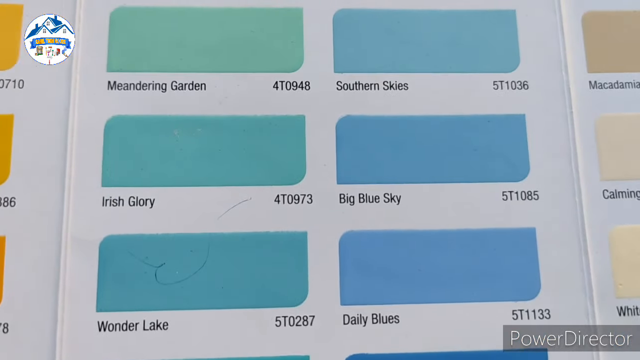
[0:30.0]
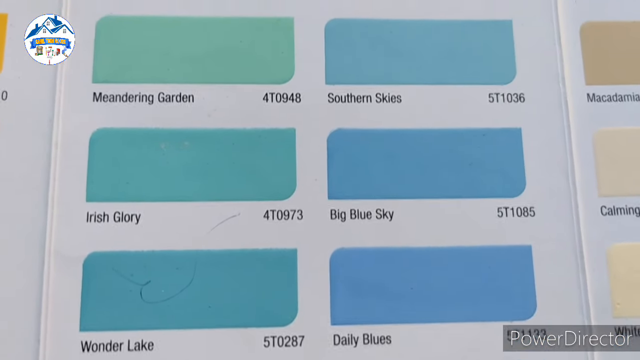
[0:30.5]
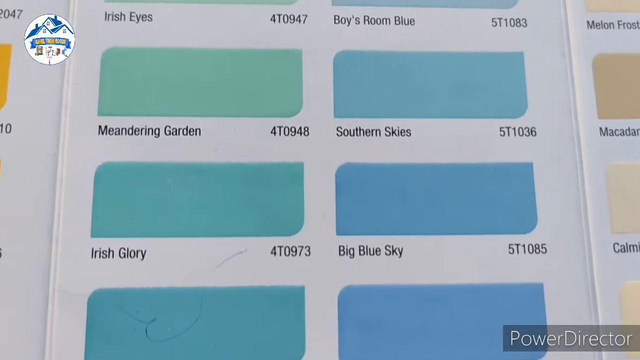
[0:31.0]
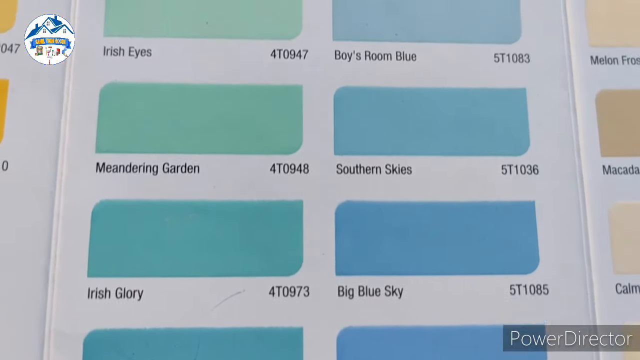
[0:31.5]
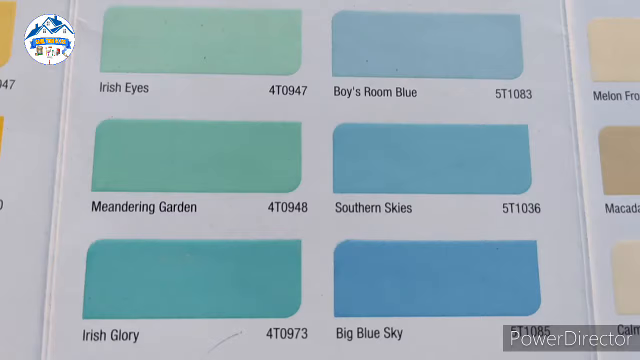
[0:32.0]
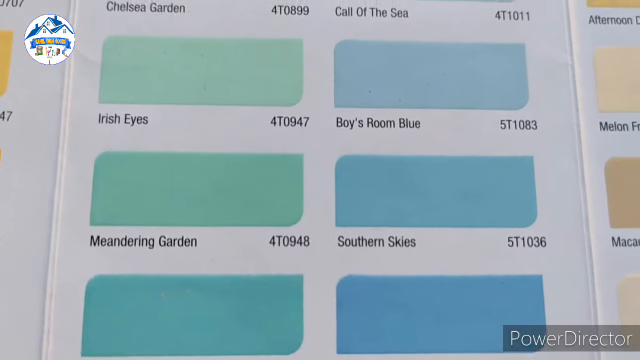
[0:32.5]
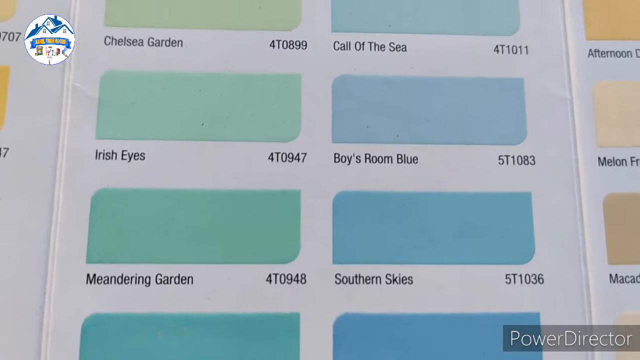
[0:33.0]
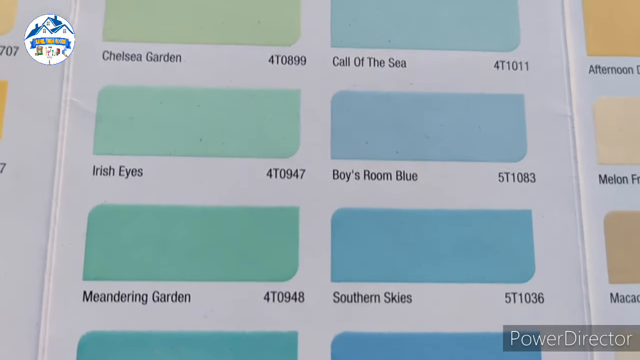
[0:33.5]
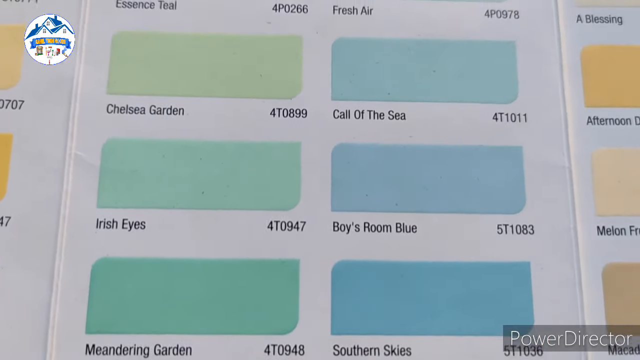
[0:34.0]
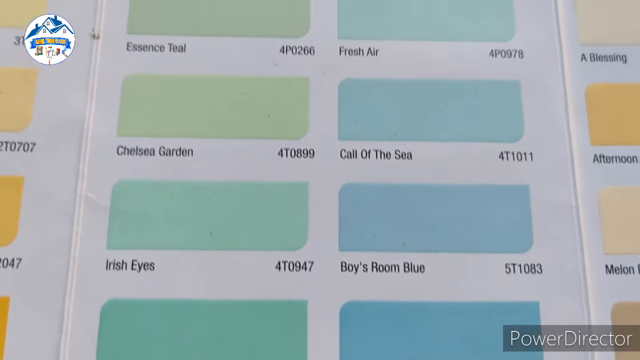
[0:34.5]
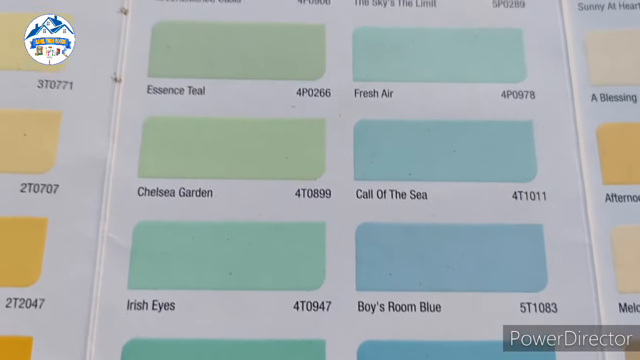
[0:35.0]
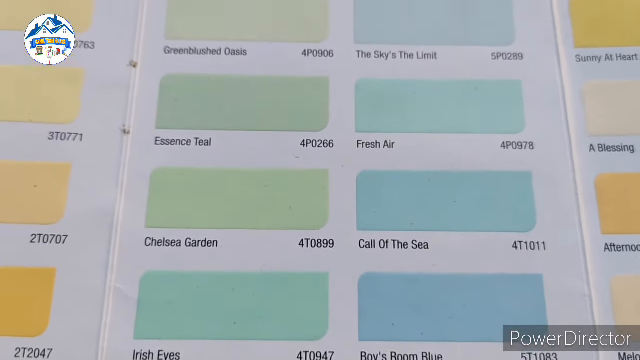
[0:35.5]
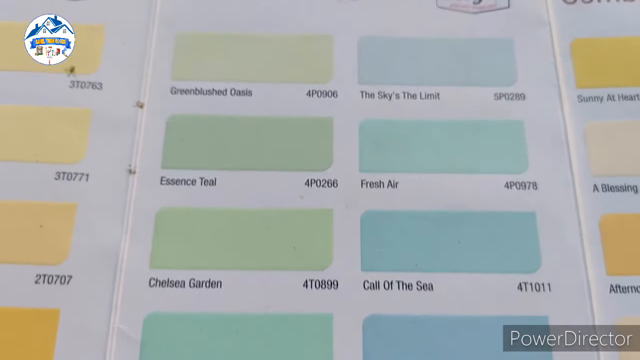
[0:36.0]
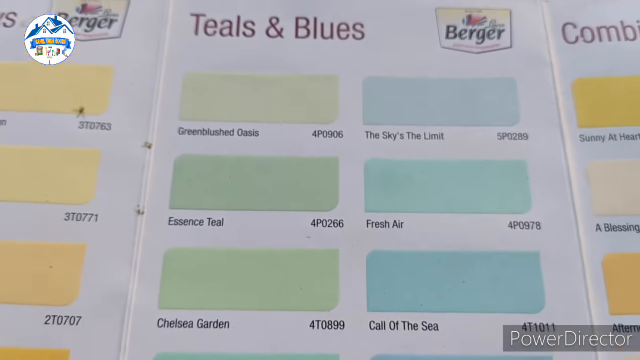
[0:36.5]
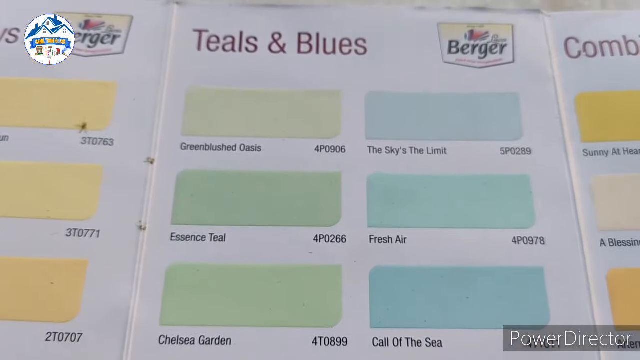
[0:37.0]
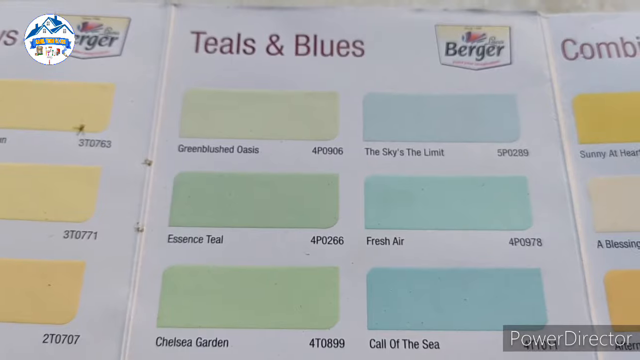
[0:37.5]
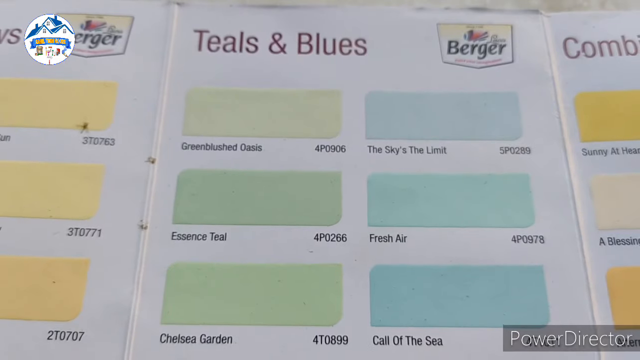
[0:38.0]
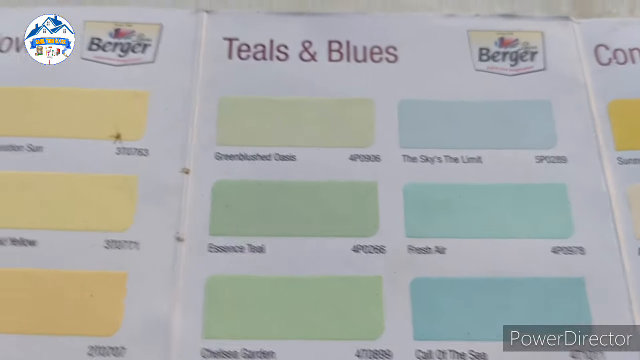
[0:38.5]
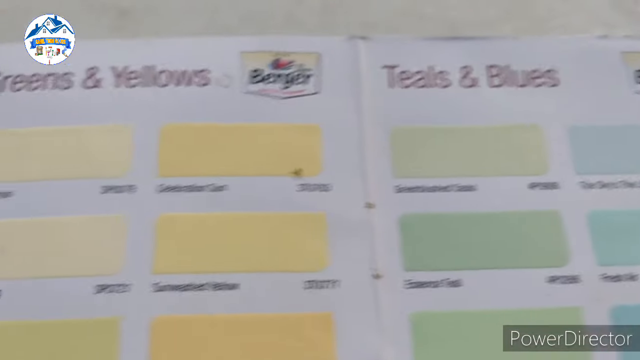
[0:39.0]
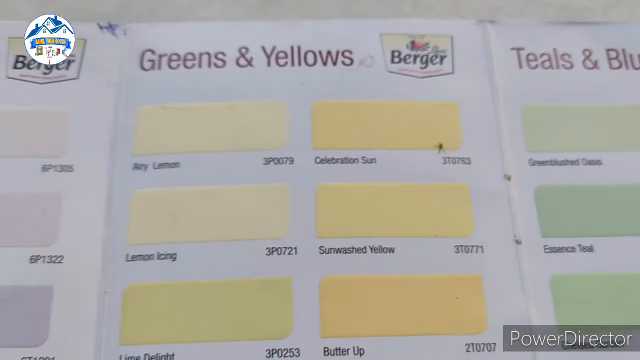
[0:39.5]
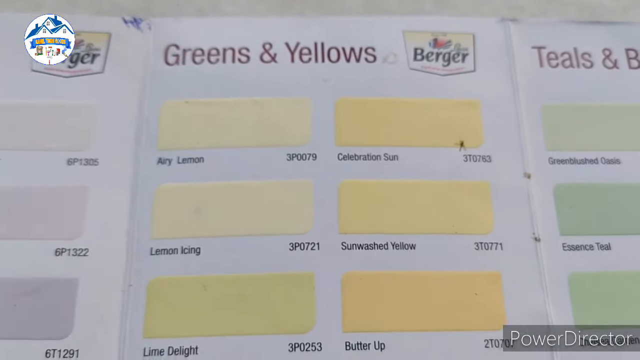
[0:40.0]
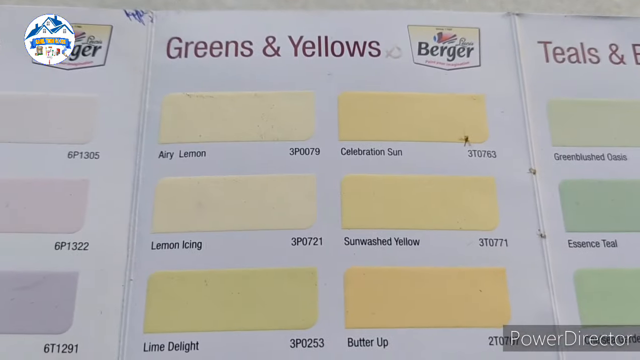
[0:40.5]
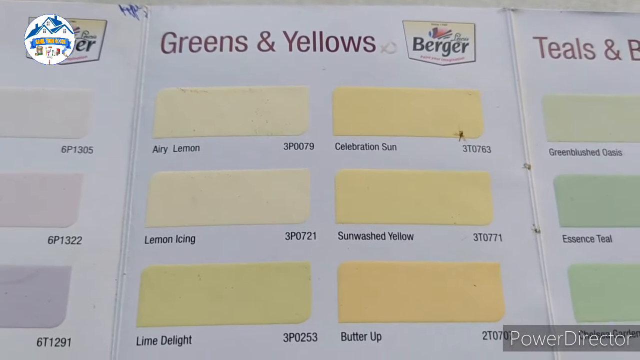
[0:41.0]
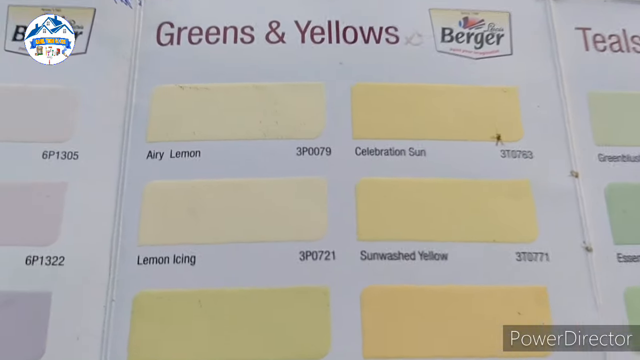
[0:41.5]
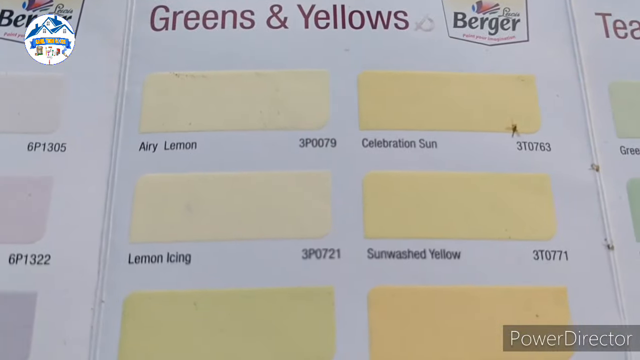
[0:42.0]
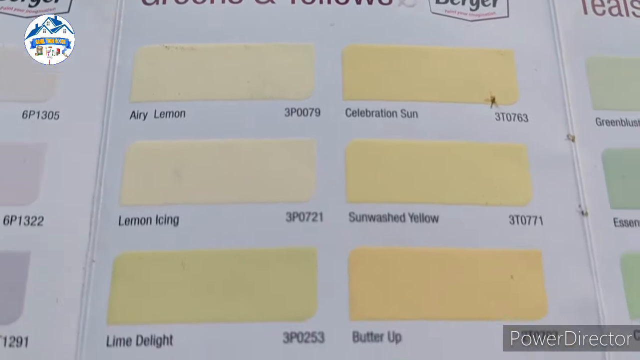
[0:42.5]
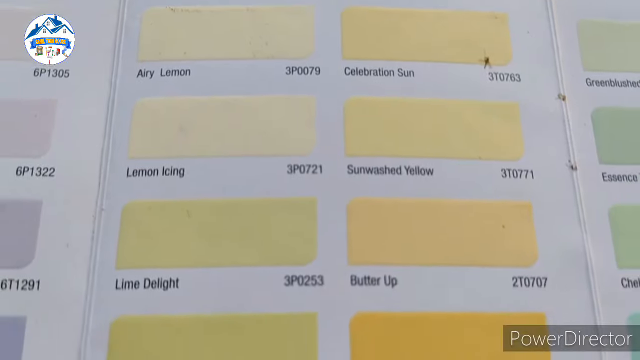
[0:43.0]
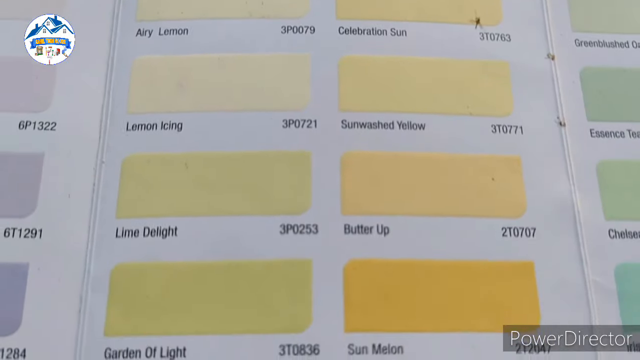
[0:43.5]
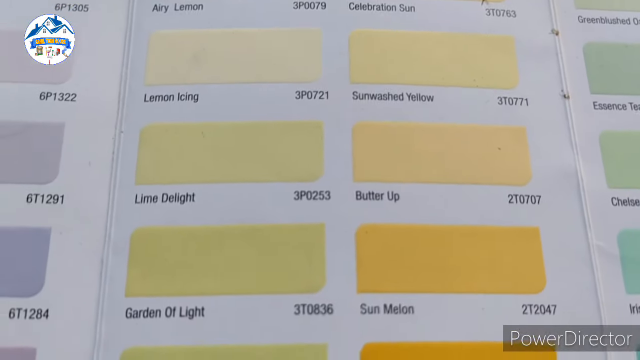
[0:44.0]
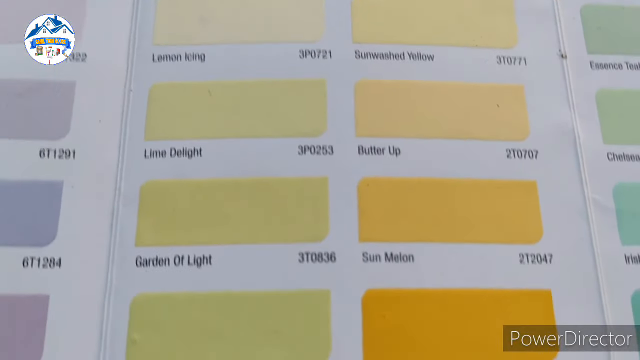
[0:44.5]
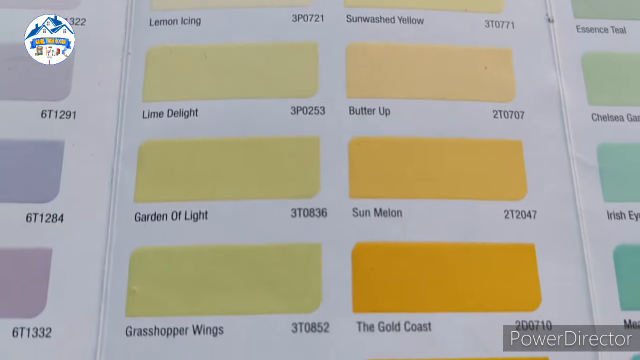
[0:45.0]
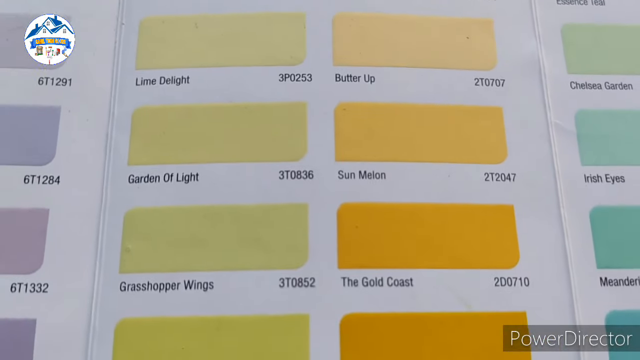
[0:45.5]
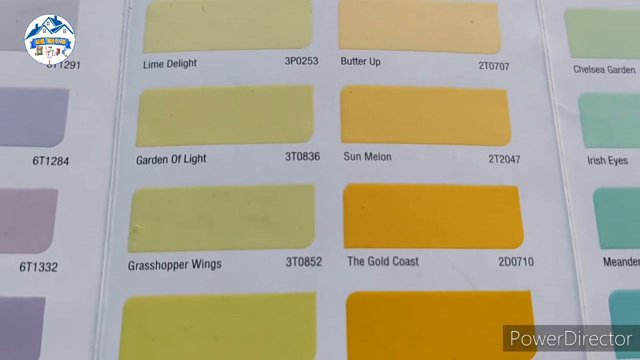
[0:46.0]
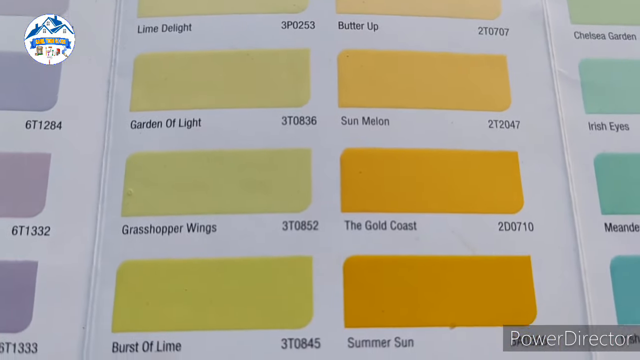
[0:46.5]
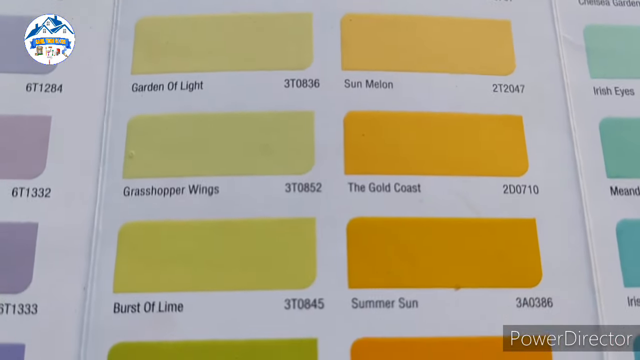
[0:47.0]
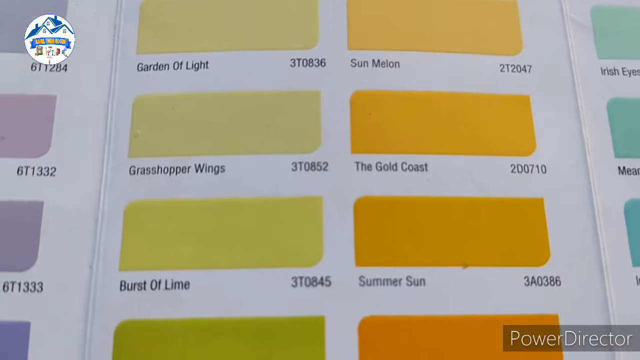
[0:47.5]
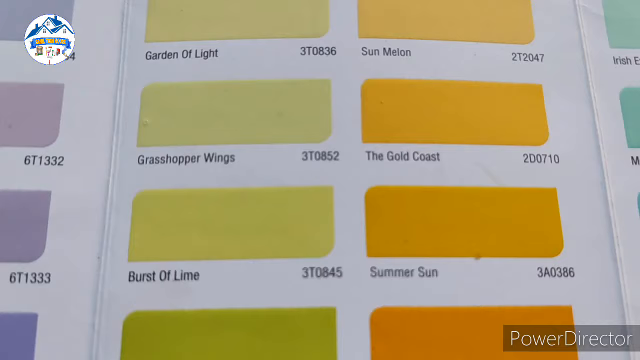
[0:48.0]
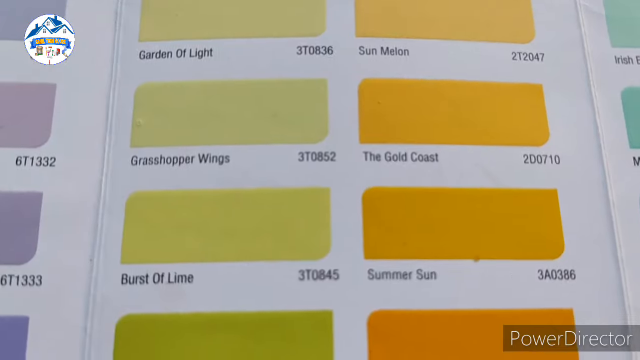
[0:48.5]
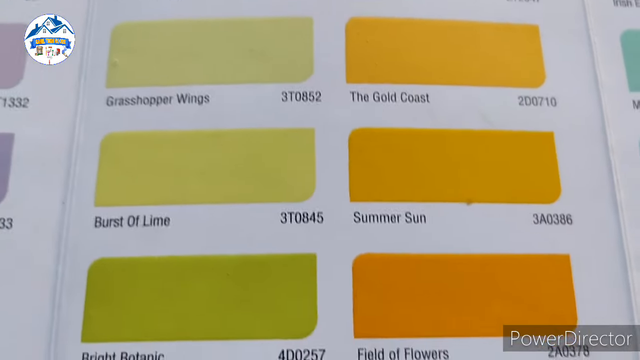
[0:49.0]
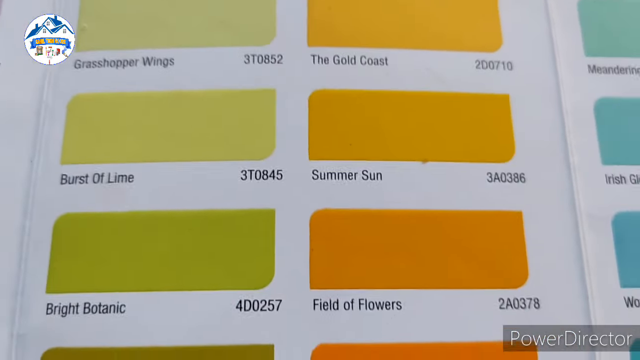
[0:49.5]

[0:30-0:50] The teals and blues paint samples range from light green, like teal, to light blue, and have different names, including Fresh Air, Chelsea Garden and Call of the Sea. The view moves to the next section, greens and yellows, and zooms in so the color samples are clearly visible. They are kind of lighter at the top, starting with lighter yellow such as Airy Lemon, and further down they get seemingly brighter, with more vivid yellow and green colors; one, called Gold Coast, is kind of an orange and yellow combination. The samples are on a white background with the brand name Berger, and there are numbers to the right of the samples, which are all about the same size and shape.